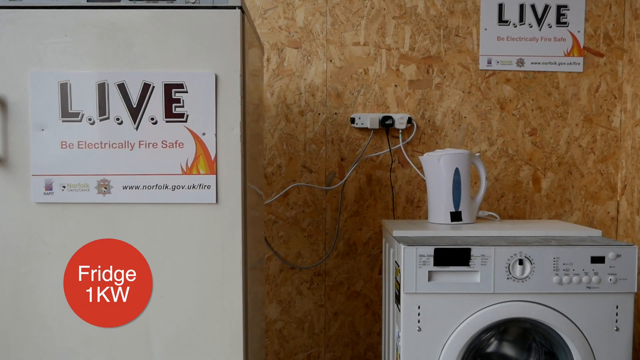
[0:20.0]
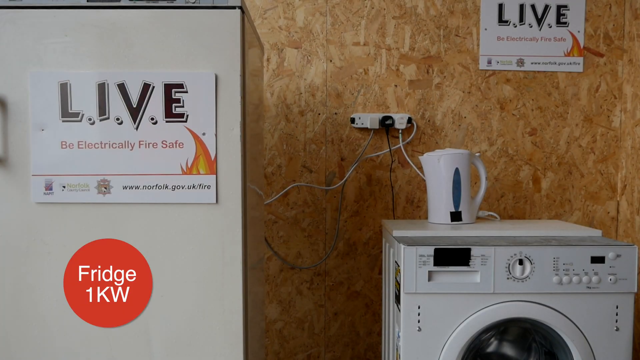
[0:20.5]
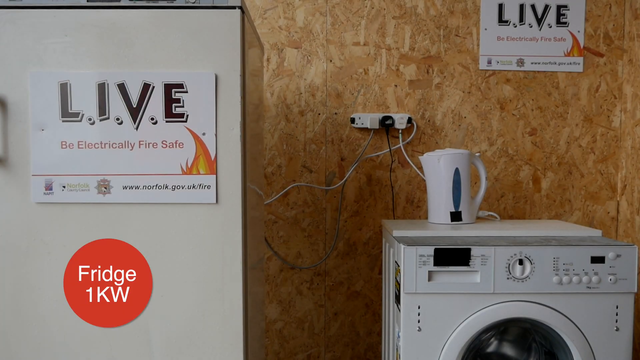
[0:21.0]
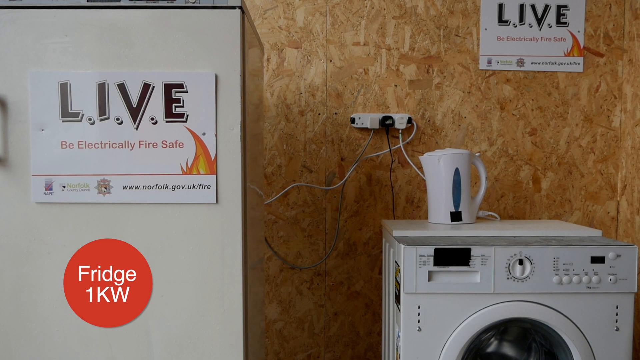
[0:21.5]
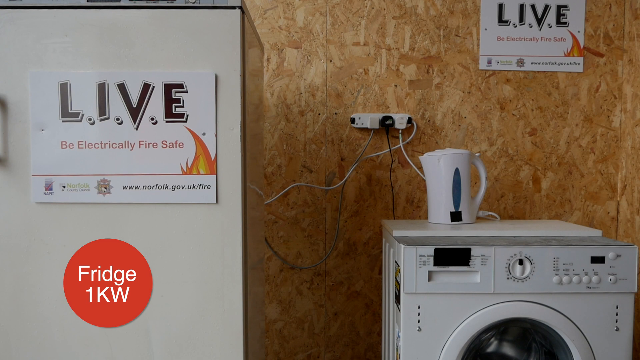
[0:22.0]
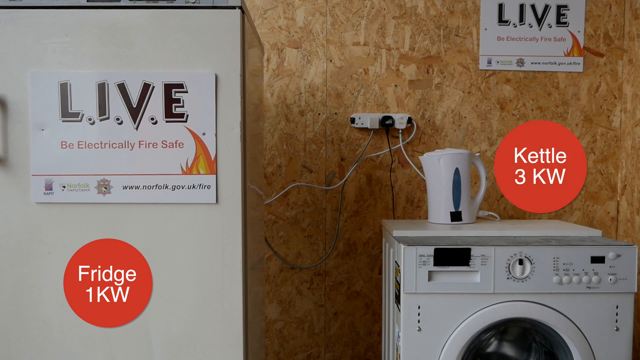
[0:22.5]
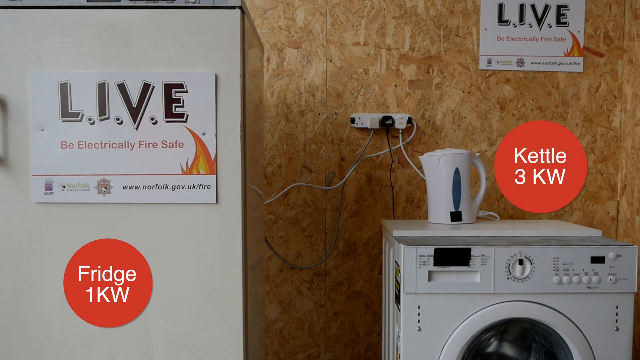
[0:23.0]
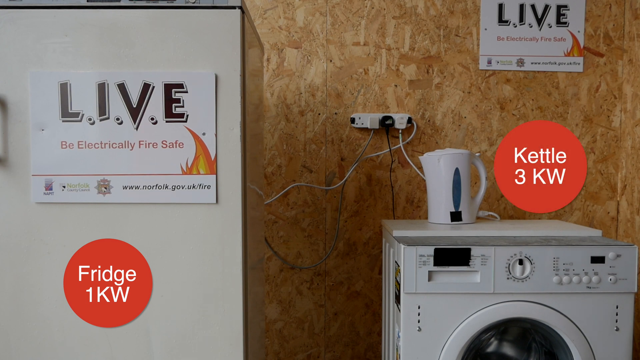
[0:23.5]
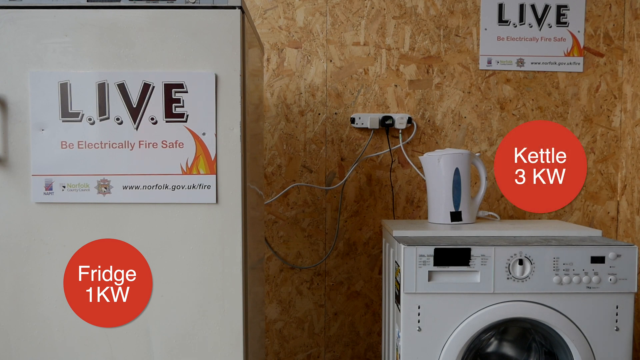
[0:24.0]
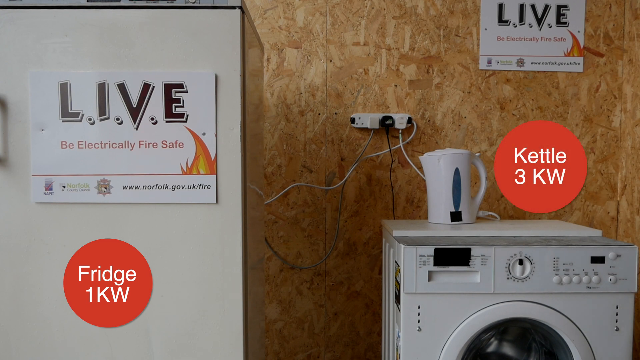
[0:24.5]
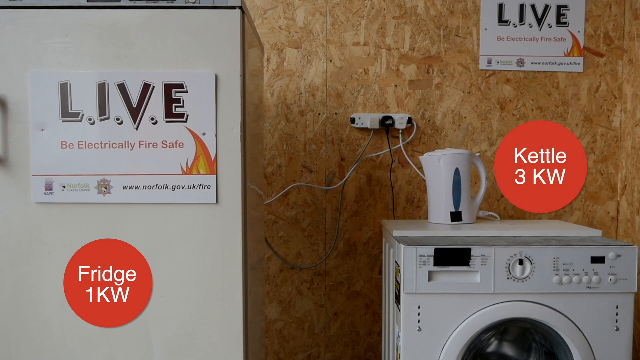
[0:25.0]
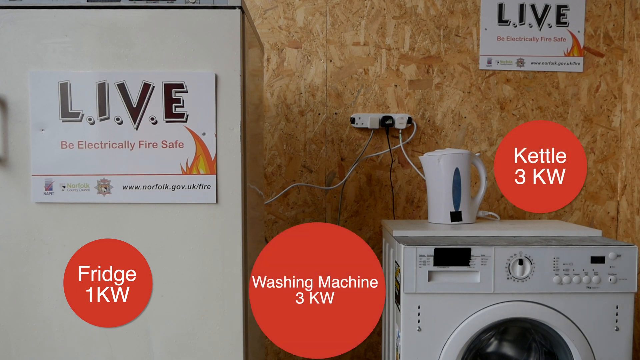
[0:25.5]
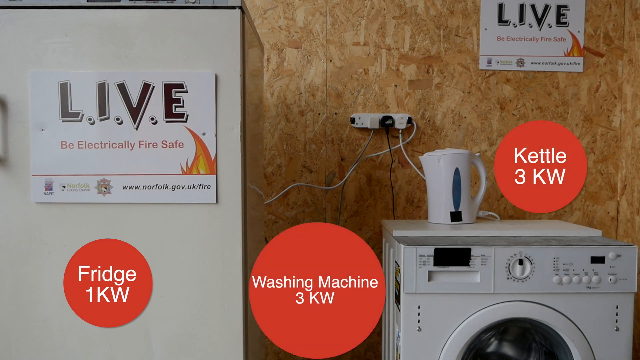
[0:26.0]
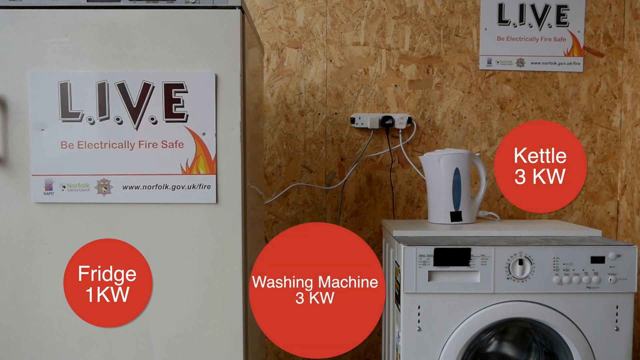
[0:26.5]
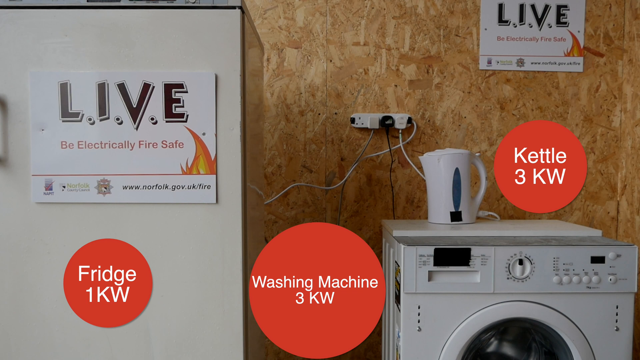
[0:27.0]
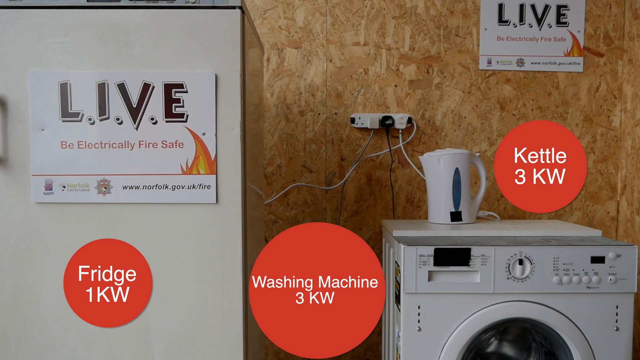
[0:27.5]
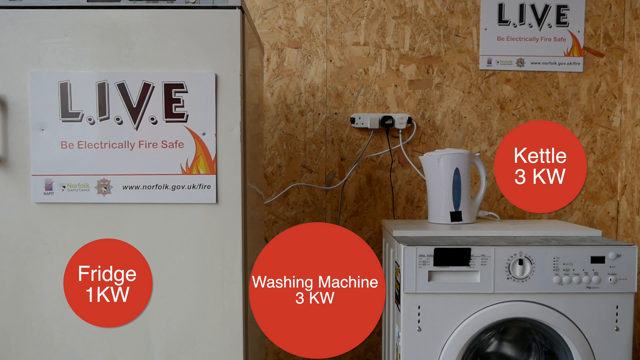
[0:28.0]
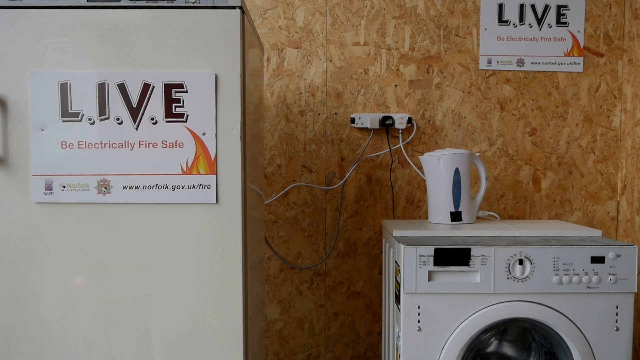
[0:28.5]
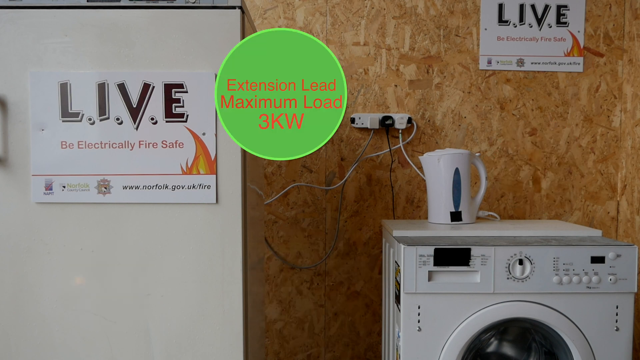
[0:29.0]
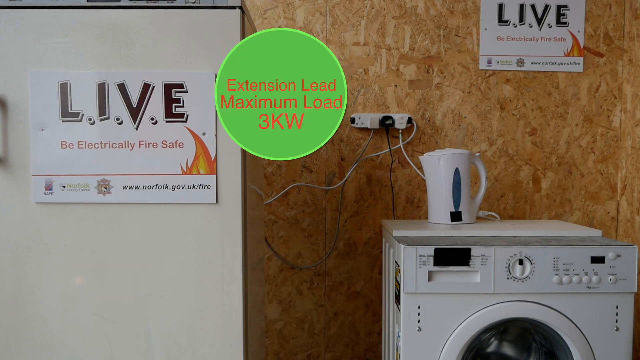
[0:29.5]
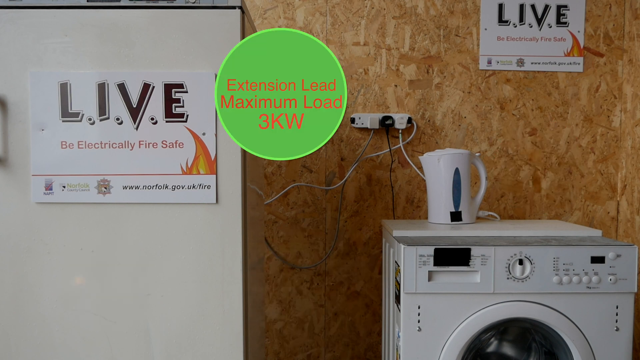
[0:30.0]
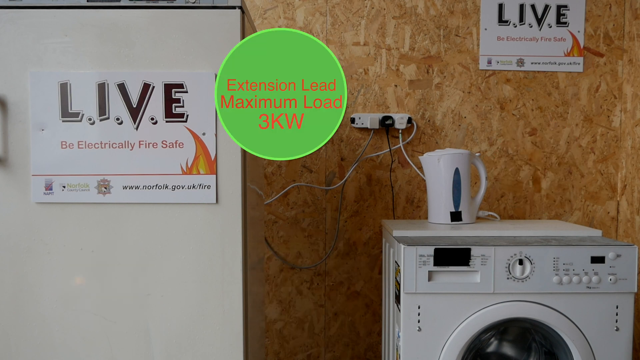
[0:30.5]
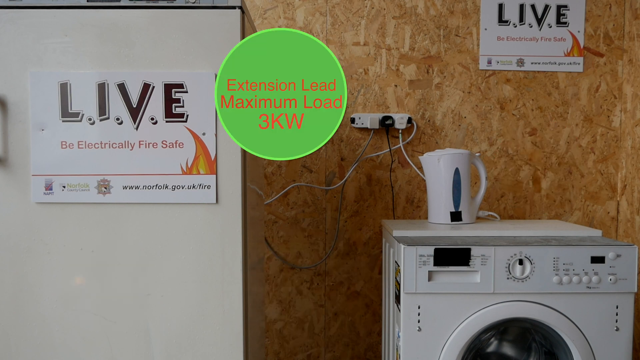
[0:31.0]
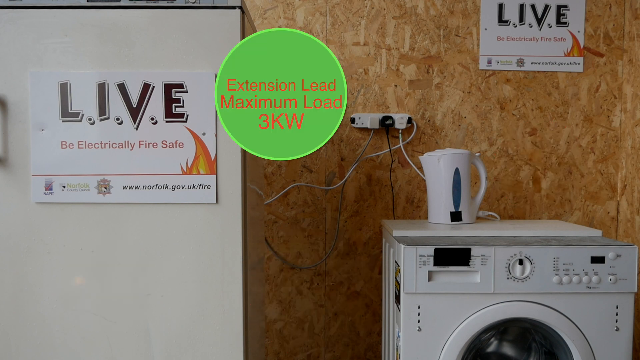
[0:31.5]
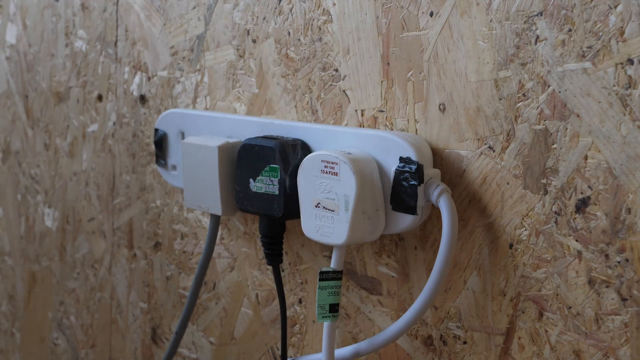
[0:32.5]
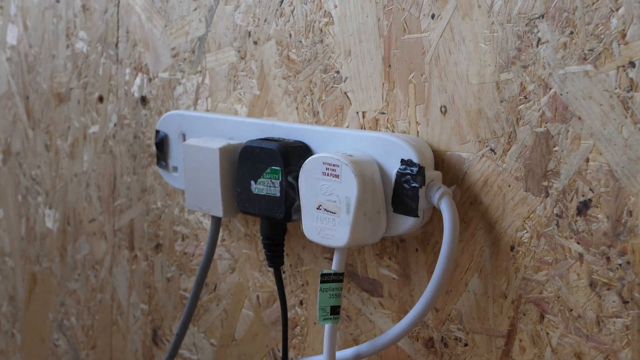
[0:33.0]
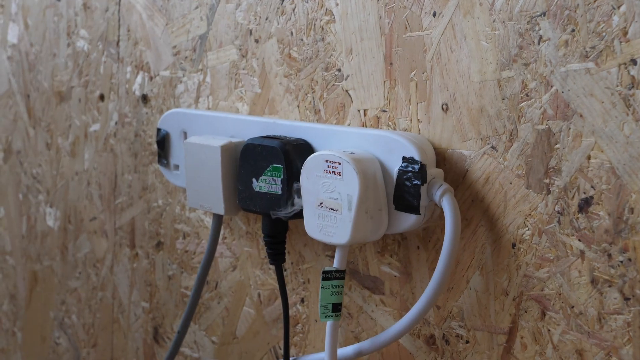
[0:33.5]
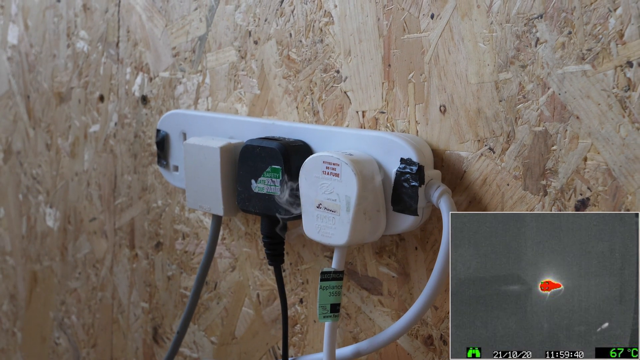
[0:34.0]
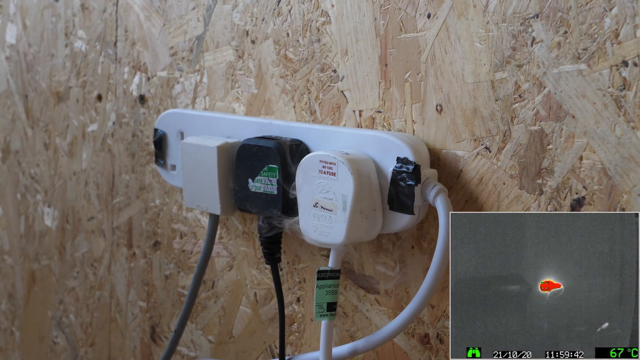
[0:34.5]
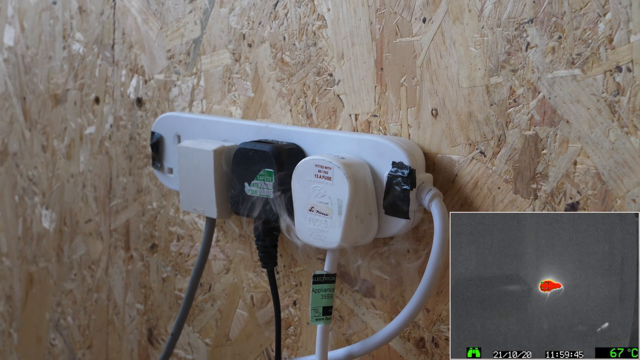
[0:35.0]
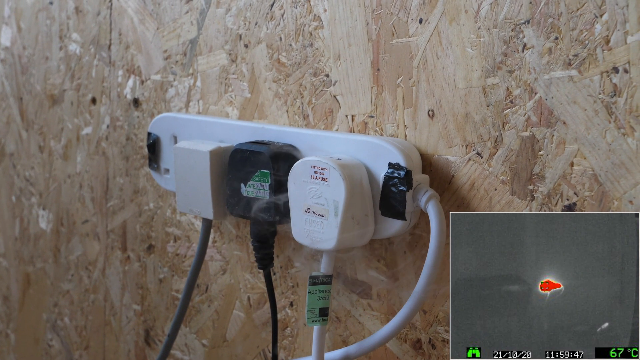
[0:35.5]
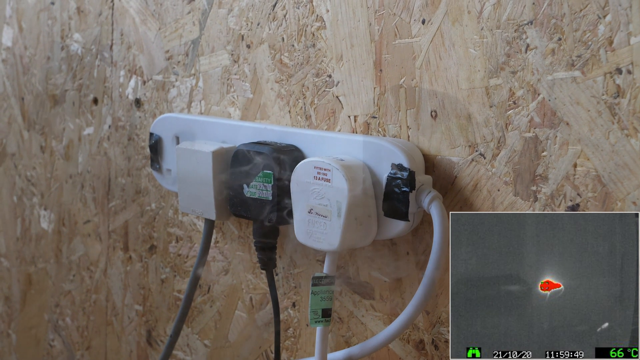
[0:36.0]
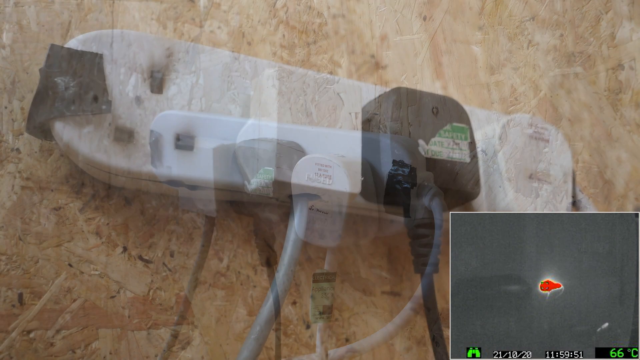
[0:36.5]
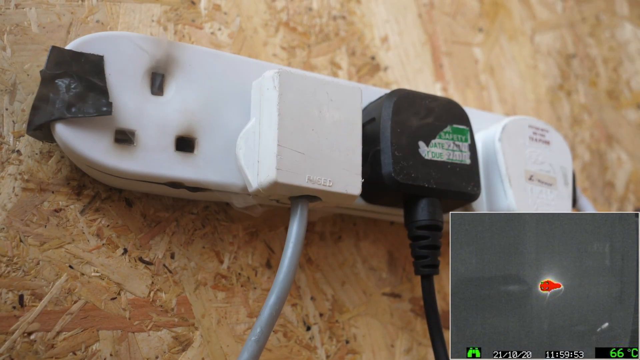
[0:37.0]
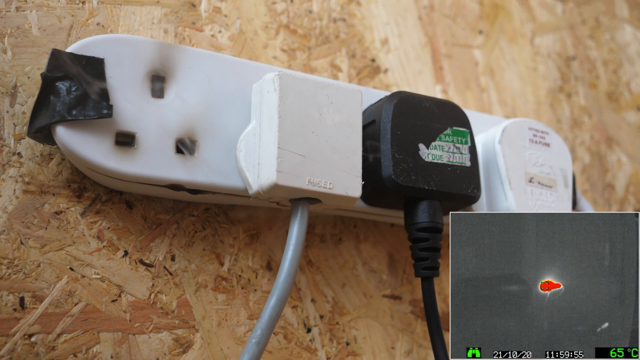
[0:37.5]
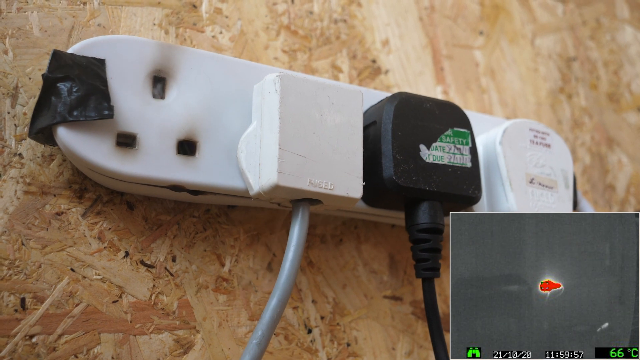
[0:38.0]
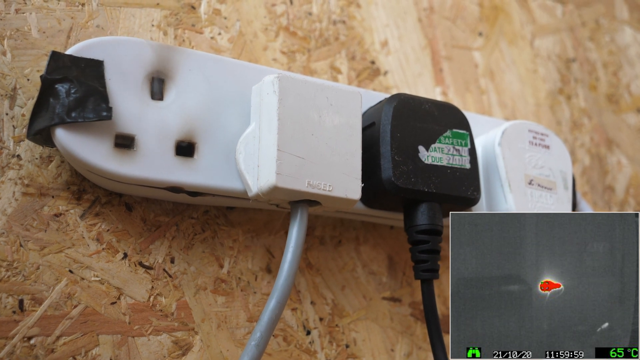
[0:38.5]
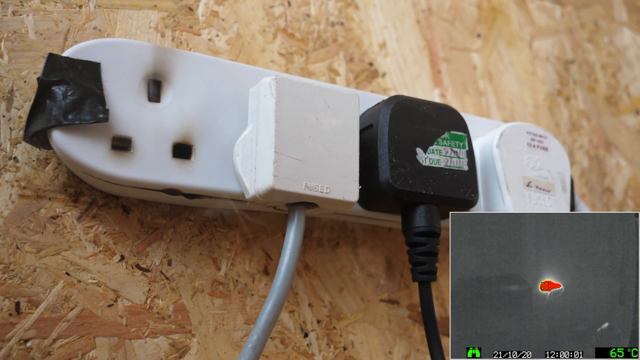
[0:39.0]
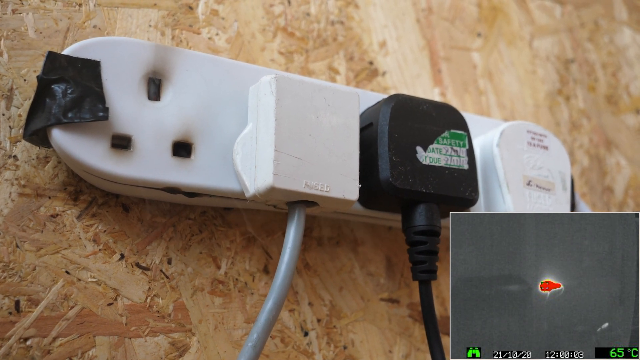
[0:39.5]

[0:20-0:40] A washing machine is at the bottom right-hand side of the screen, and on top of it is an electric kettle that is plugged in. To the left of that is what looks like a fridge freezer. On the front of the fridge freezer is a poster with L.I.V.E with dots between the letters, and behind, on the wooden panelled wall, is another poster with L.I.V.E and an overloaded plug socket. Two circles flash up on the screen with the voltage for the kettle and the fridge, then a third circle appears in the middle, and then a green circle flashes up at the top with more information. The view zooms in on the overloaded plug socket, which has a black plug and two white plugs in a four-plug option, with one socket left empty. Smoke is coming from one of the plugs. The kettle is three kilowatts, the fridge is one kilowatt, the washing machine is three kilowatts, and the extension lead maximum load is three kilowatts. There is electrical tape on either side of the plug socket, and the empty socket is blackened around the holes where the prongs are inserted.